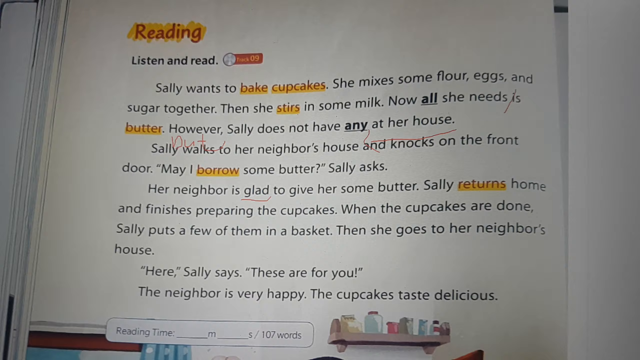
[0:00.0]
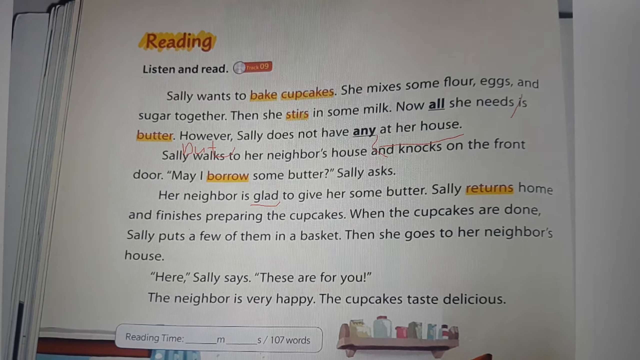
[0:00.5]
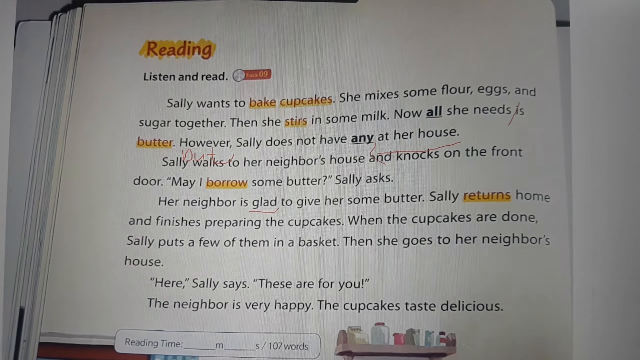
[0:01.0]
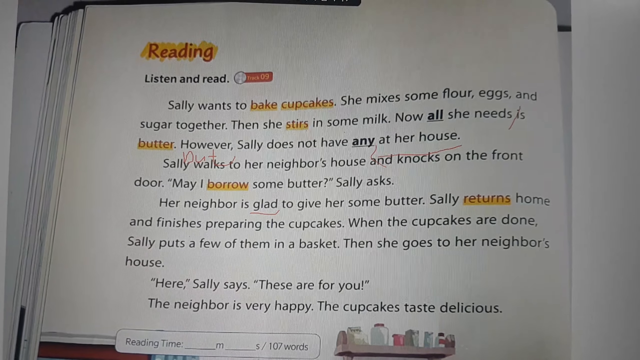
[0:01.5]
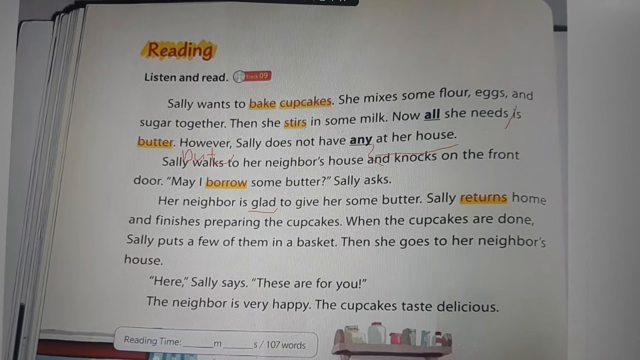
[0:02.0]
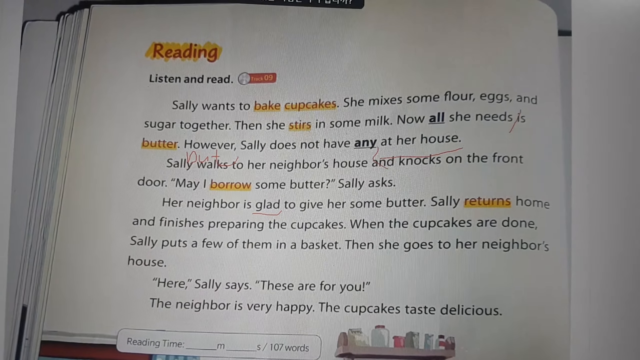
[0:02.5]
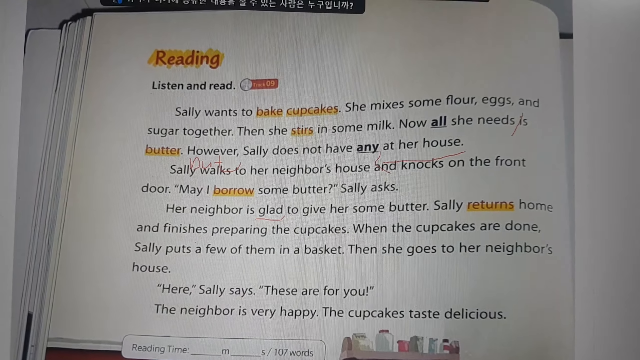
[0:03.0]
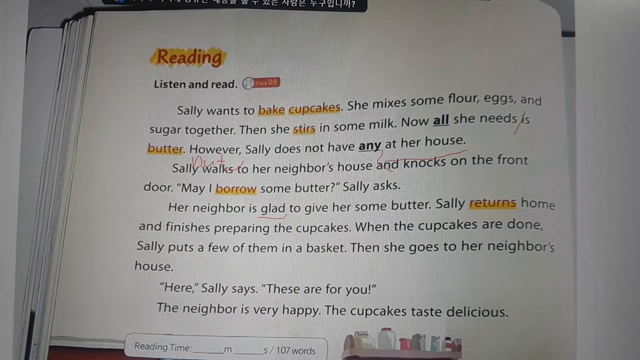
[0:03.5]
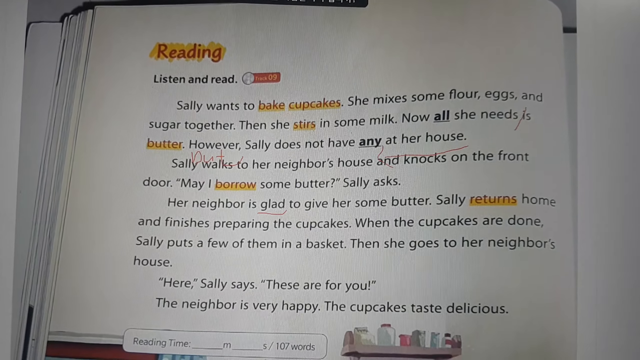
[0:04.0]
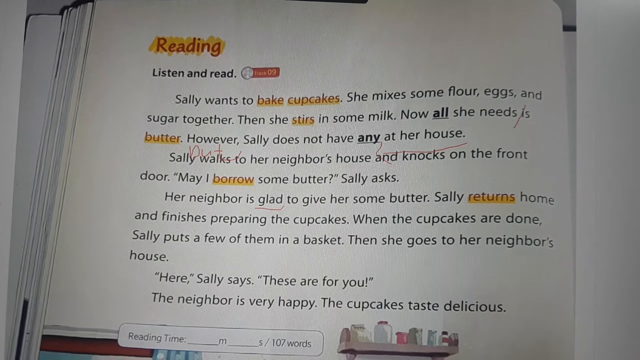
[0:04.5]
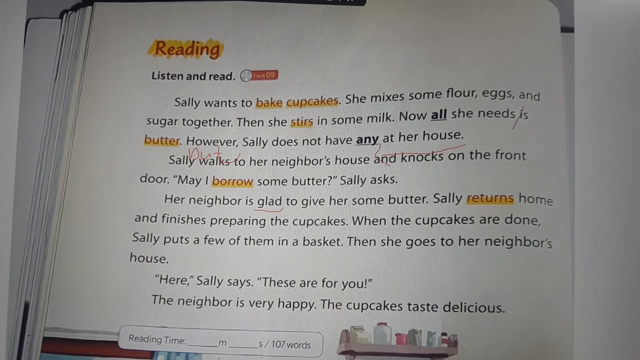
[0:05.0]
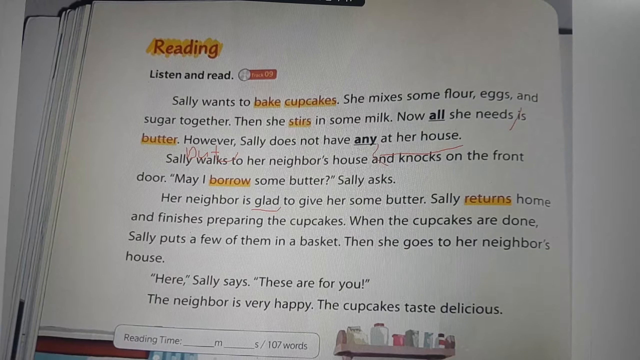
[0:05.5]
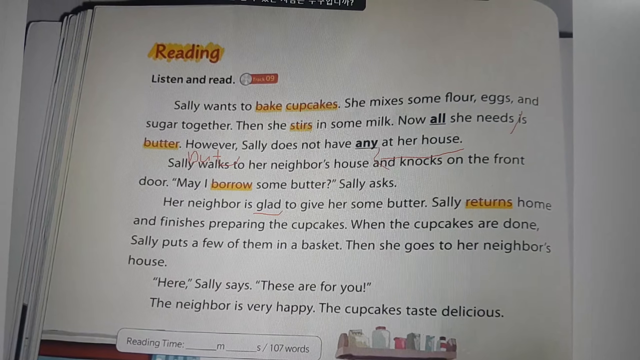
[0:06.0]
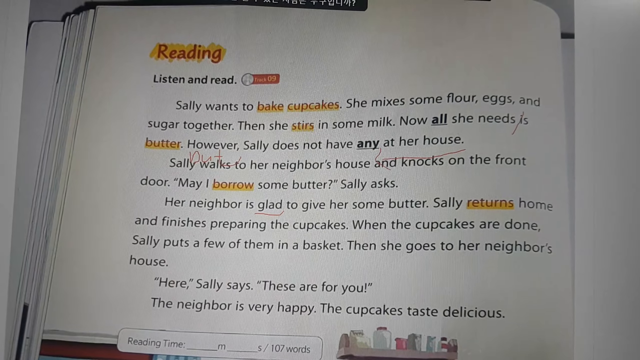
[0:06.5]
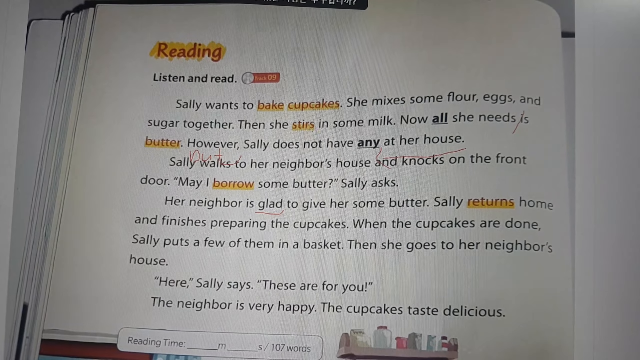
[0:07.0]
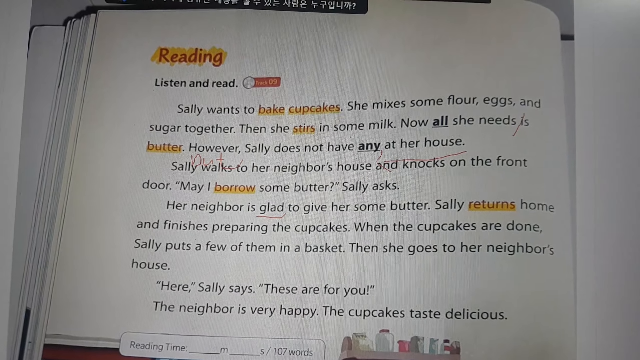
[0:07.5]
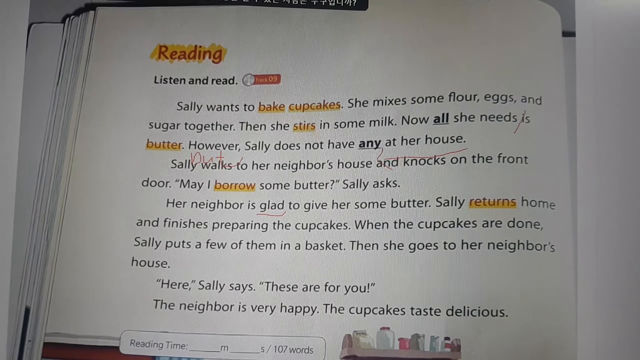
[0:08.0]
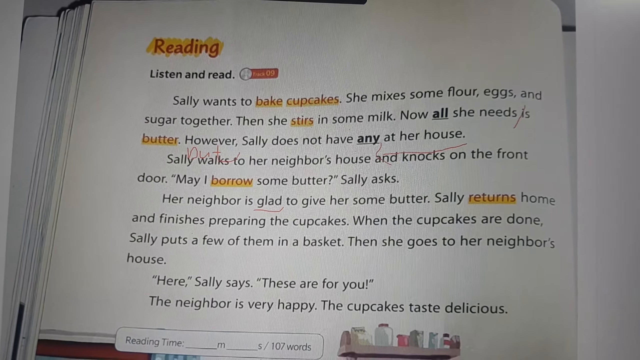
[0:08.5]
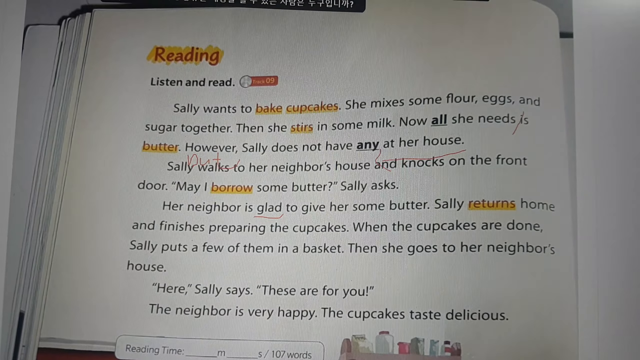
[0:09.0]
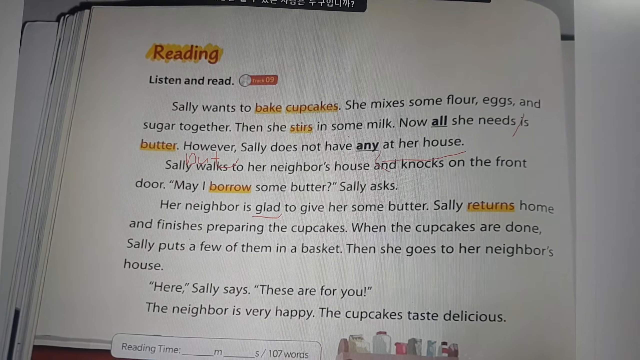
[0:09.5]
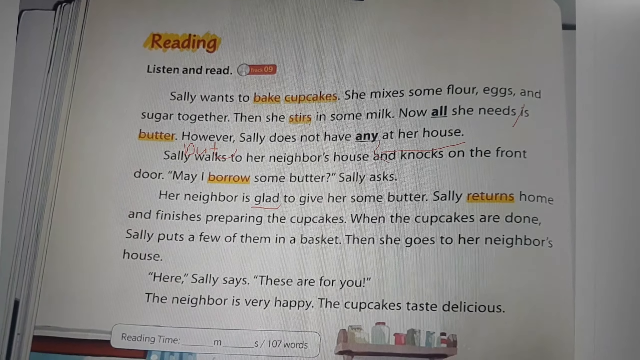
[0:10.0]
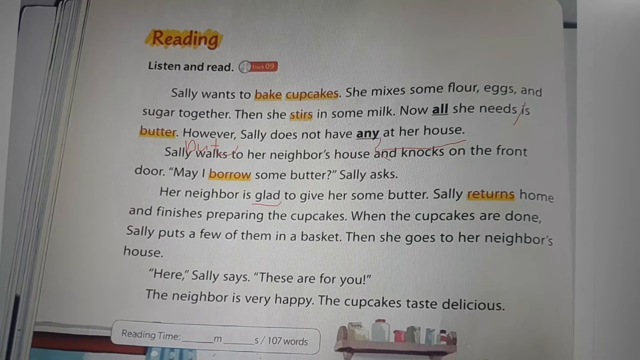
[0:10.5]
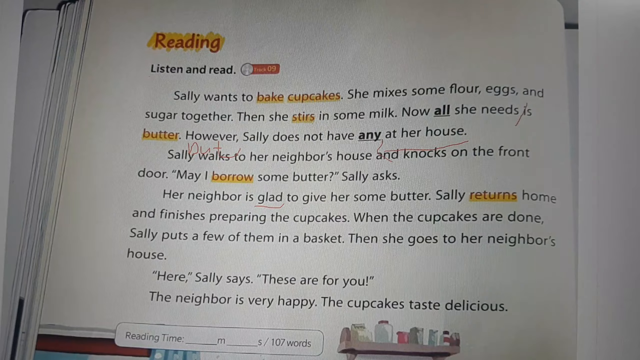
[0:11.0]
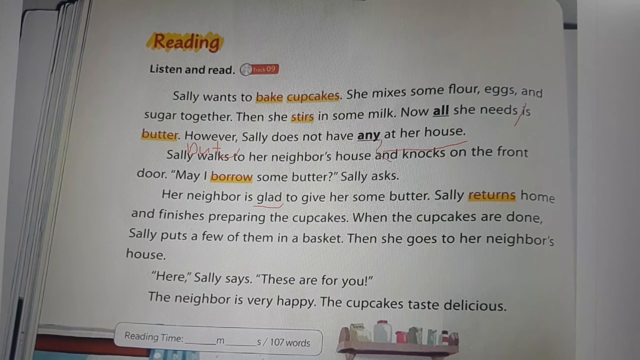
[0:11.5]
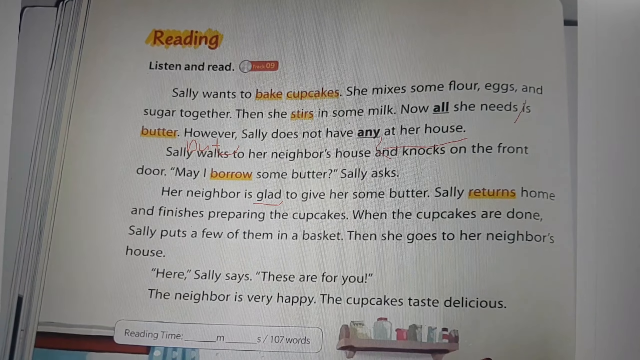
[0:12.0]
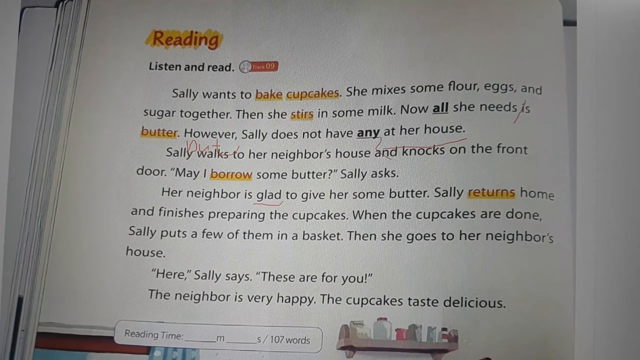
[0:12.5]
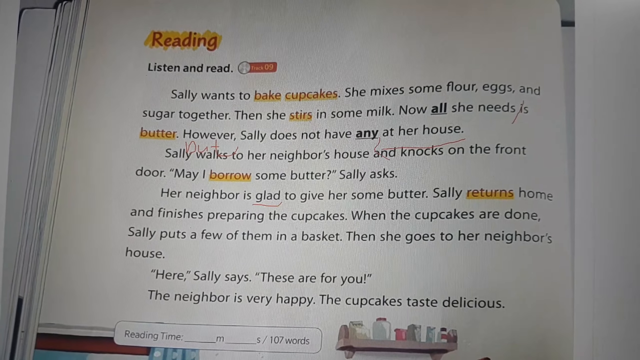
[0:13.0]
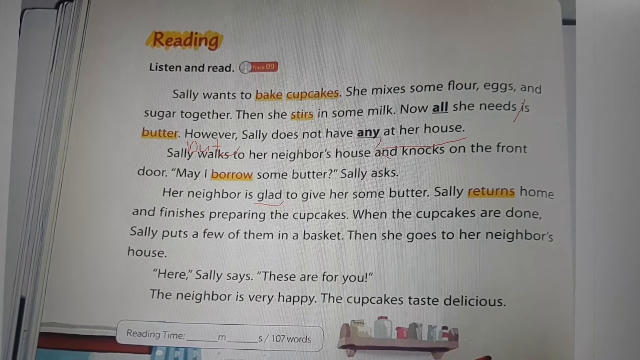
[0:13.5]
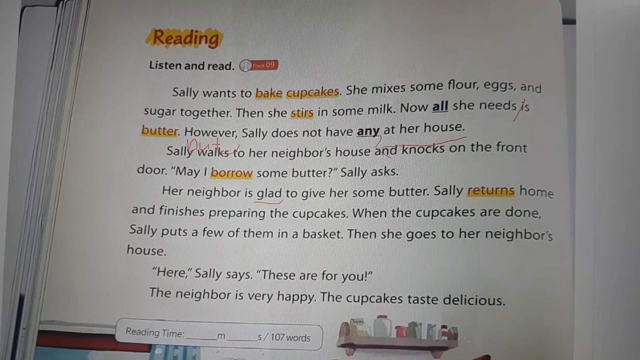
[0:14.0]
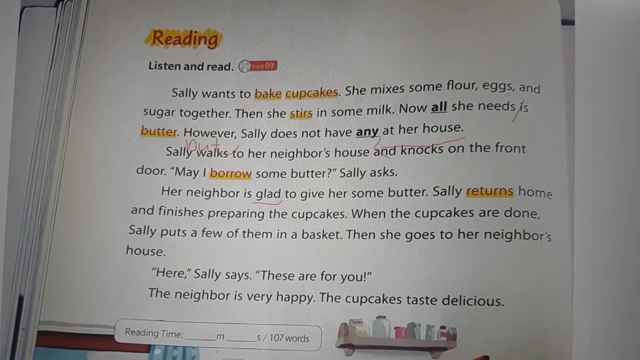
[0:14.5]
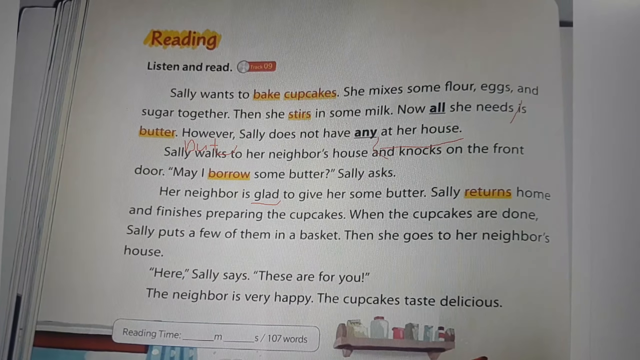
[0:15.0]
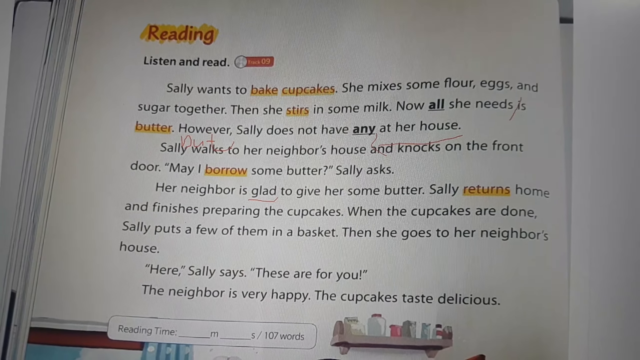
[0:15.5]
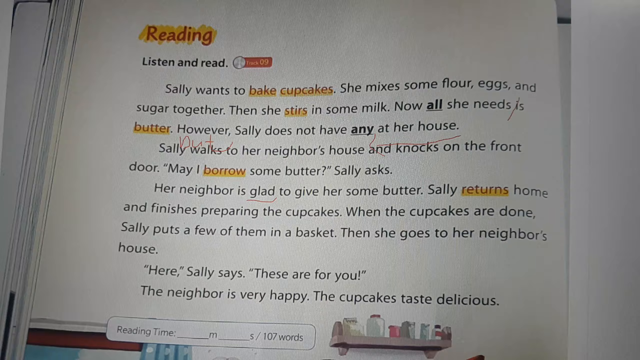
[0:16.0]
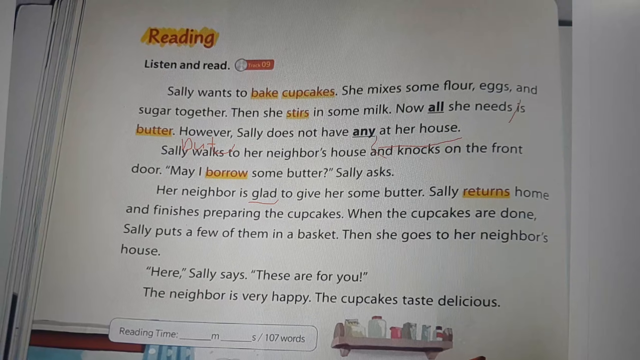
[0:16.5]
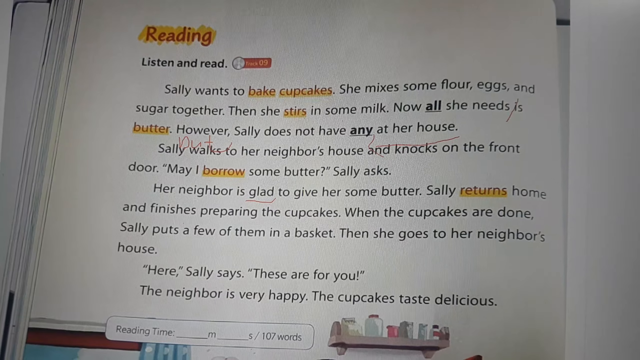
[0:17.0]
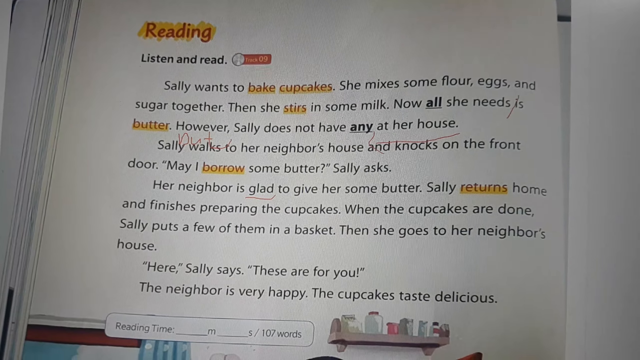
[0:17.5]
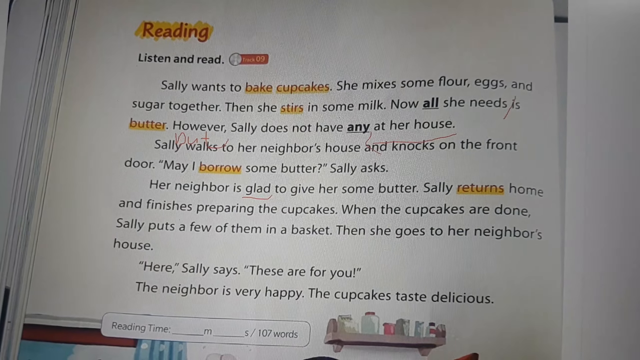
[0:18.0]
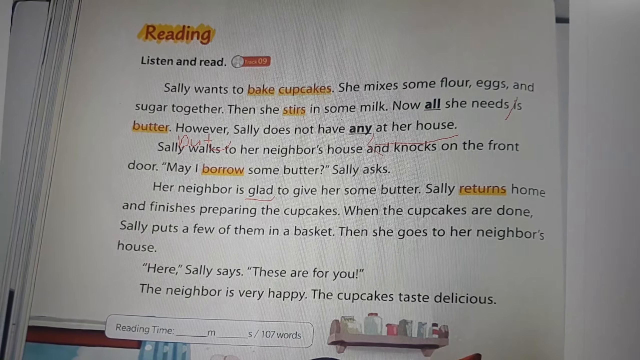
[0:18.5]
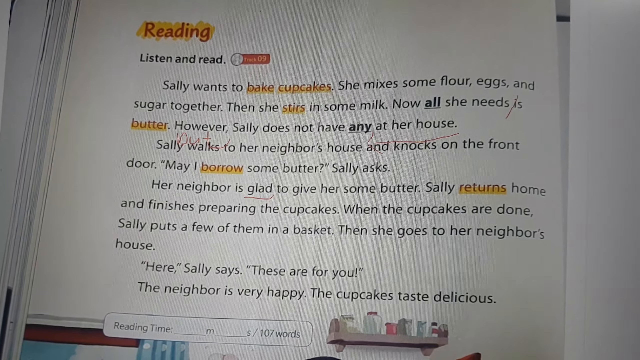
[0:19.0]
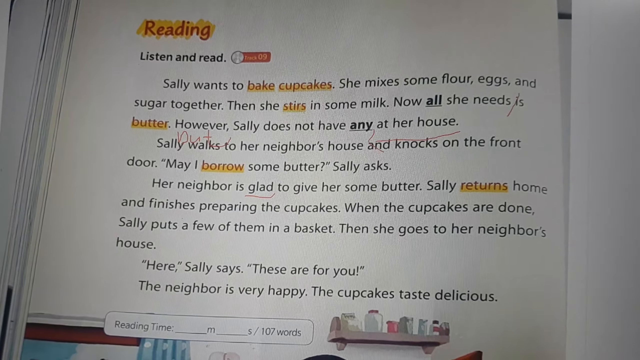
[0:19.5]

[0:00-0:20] Someone points a camera at a computer screen showing some sort of virtual reading paper containing a story, apparently meant for reading practice, possibly for someone who needs help reading English and sounding out words. At the top left, "reading" appears in red text with sort of a yellow highlight over it. Right below, in smaller black text, it says "listen and read," followed by a track labeled "track 09."